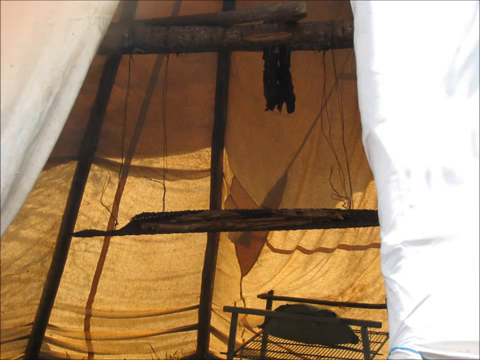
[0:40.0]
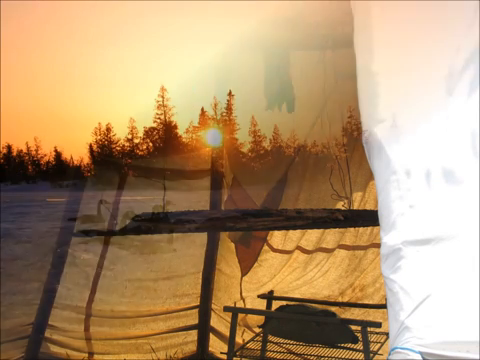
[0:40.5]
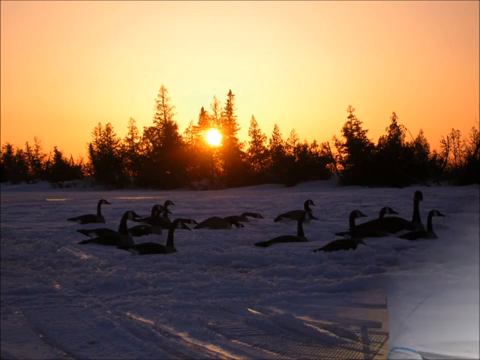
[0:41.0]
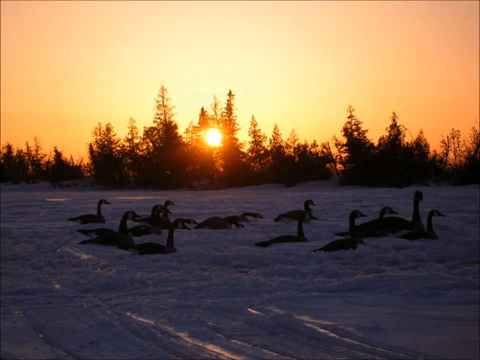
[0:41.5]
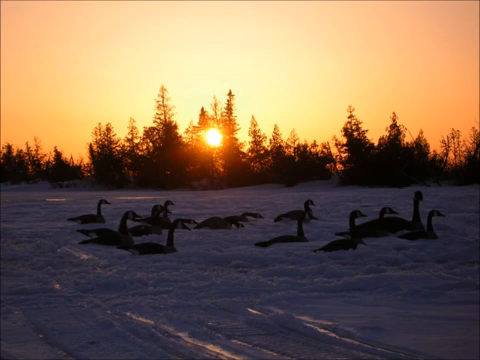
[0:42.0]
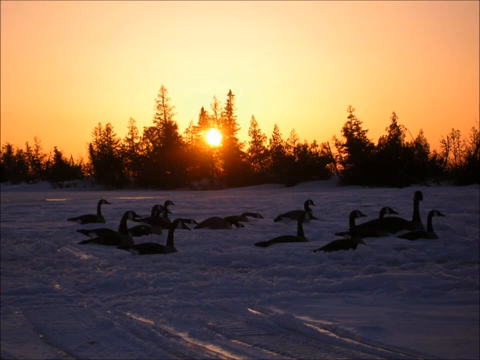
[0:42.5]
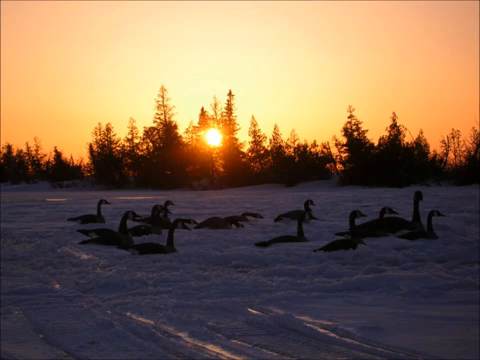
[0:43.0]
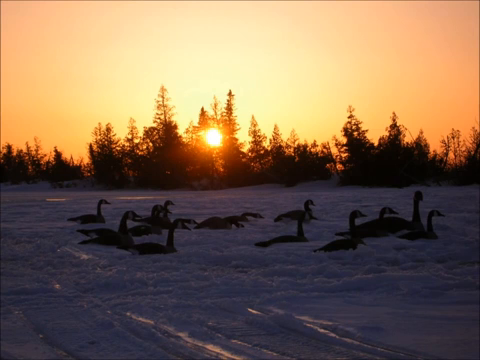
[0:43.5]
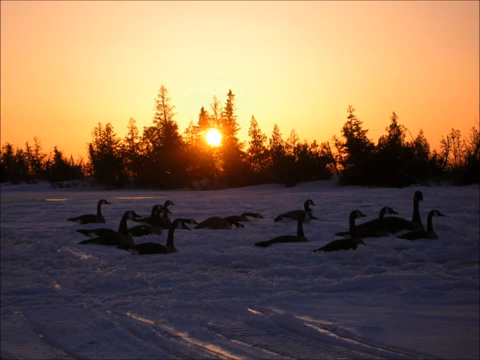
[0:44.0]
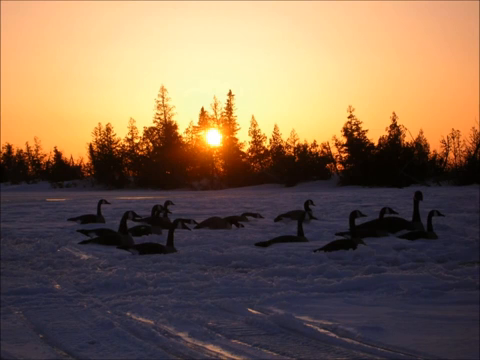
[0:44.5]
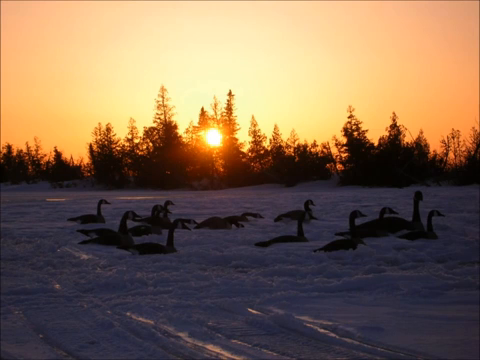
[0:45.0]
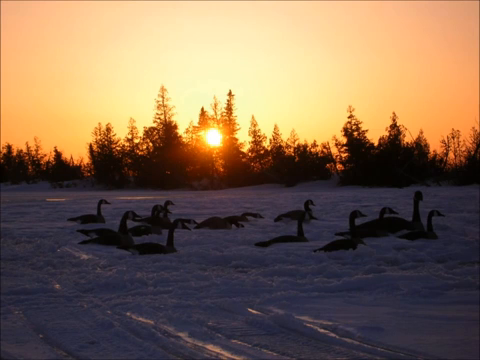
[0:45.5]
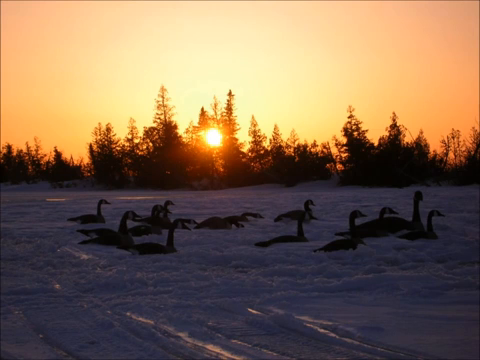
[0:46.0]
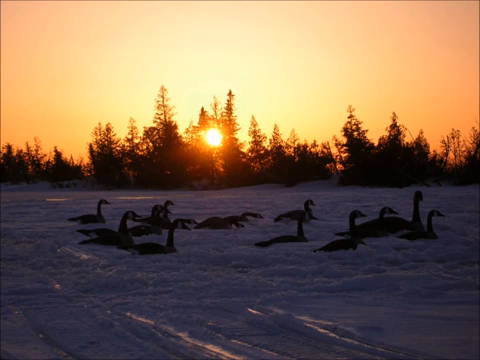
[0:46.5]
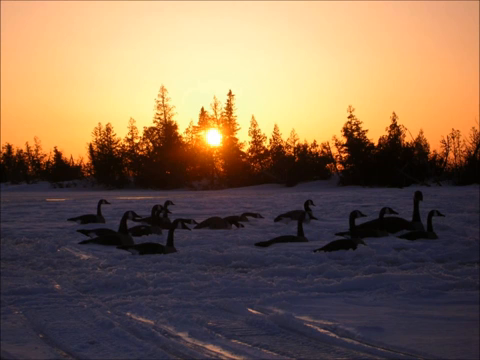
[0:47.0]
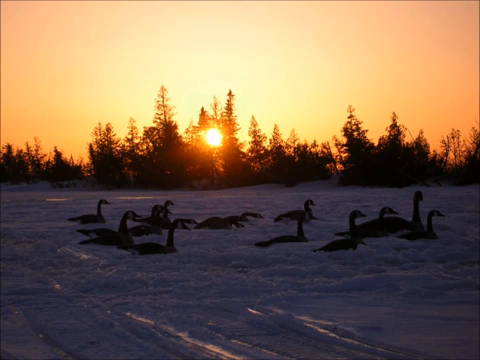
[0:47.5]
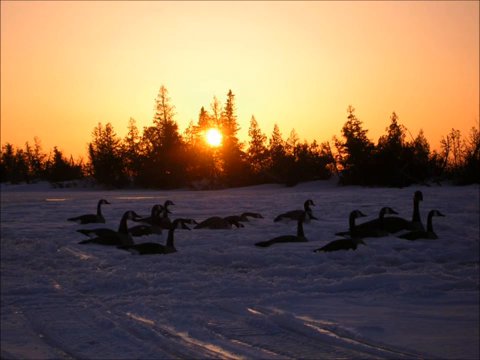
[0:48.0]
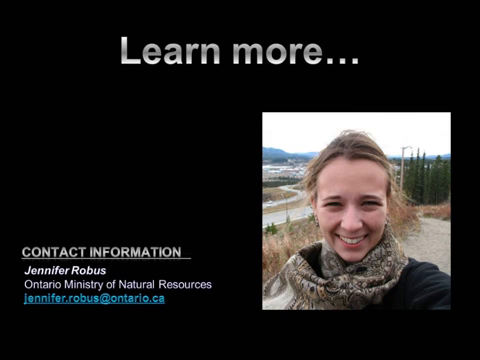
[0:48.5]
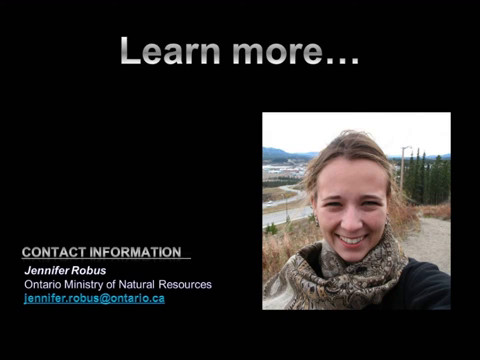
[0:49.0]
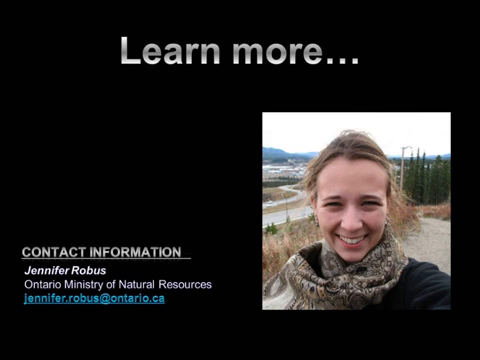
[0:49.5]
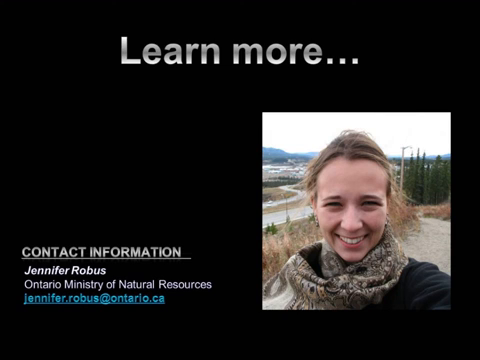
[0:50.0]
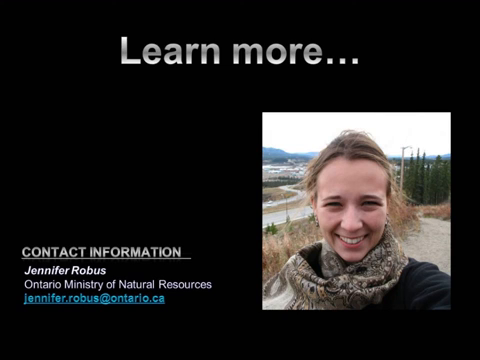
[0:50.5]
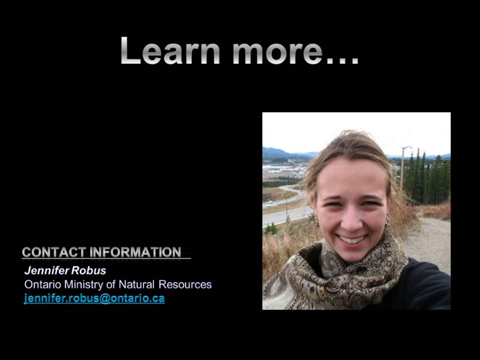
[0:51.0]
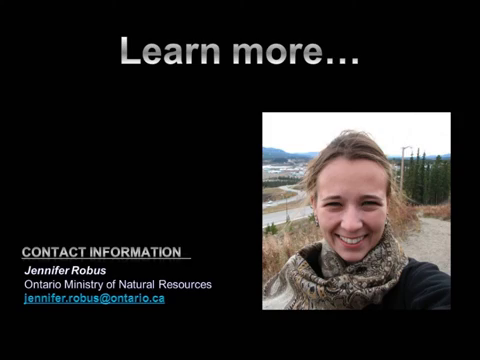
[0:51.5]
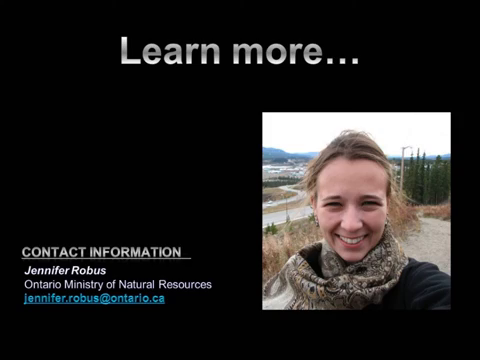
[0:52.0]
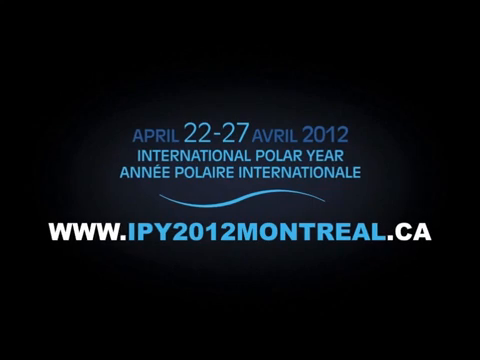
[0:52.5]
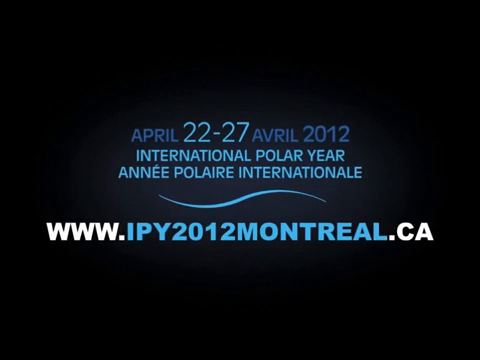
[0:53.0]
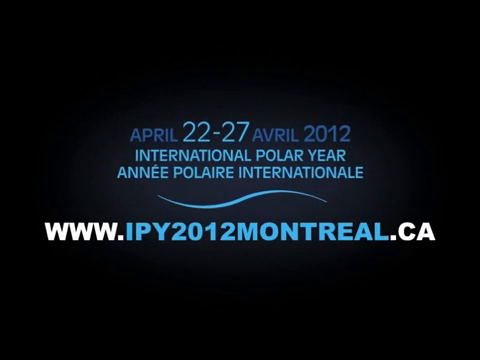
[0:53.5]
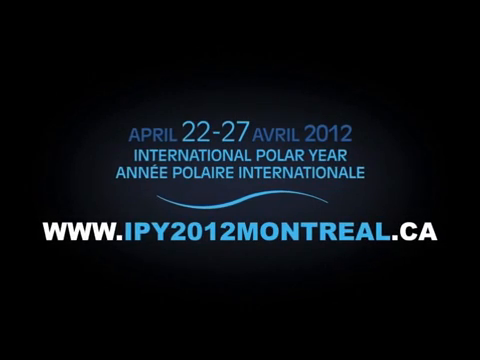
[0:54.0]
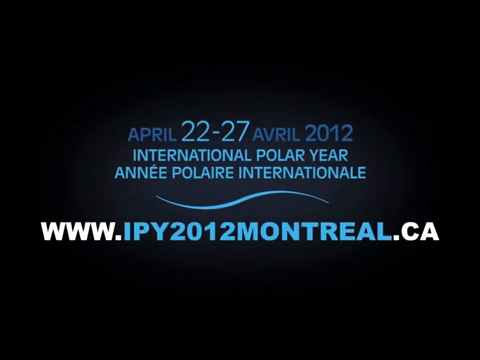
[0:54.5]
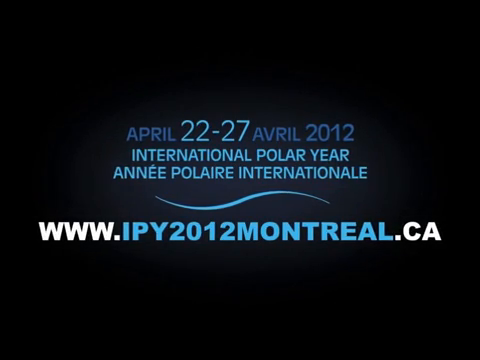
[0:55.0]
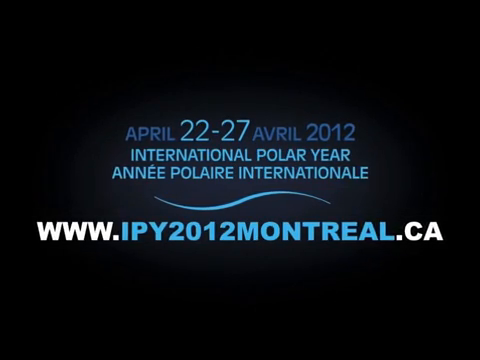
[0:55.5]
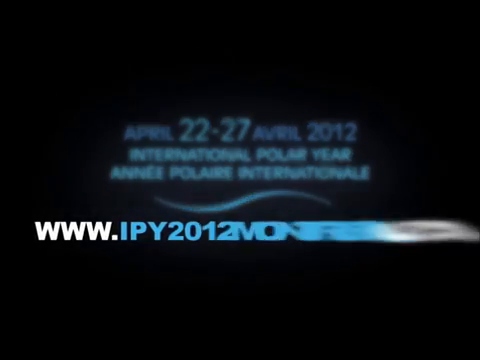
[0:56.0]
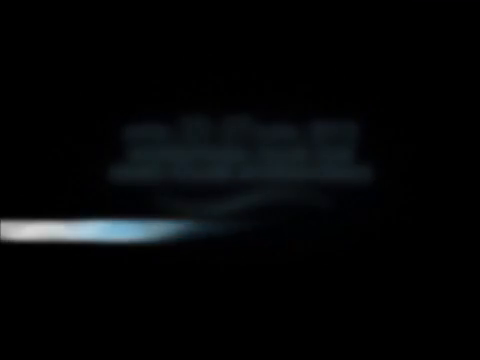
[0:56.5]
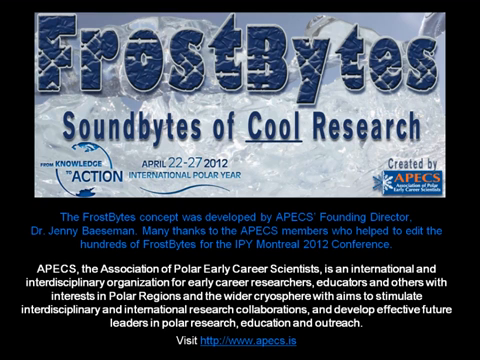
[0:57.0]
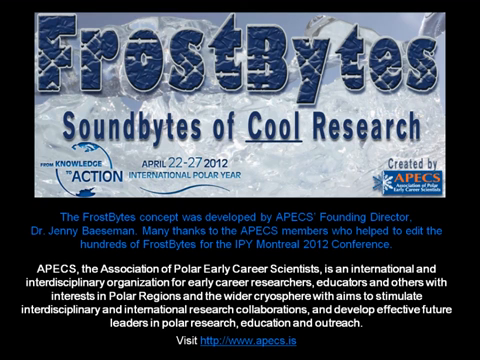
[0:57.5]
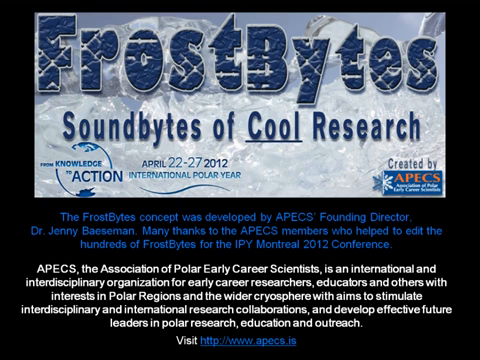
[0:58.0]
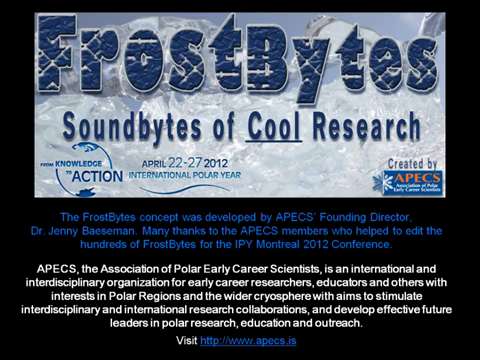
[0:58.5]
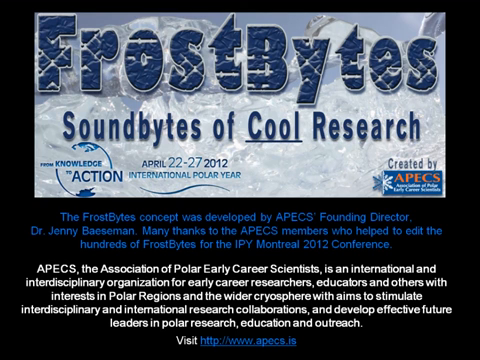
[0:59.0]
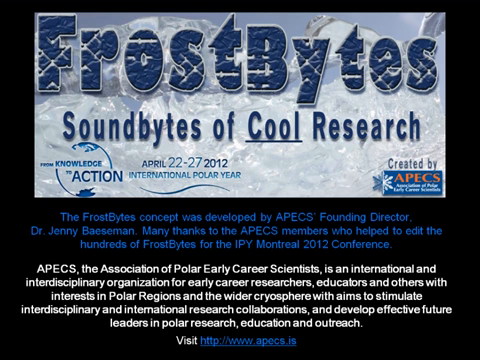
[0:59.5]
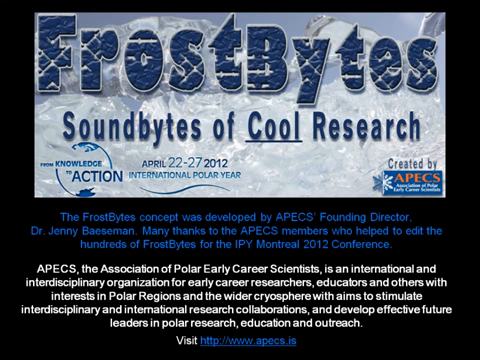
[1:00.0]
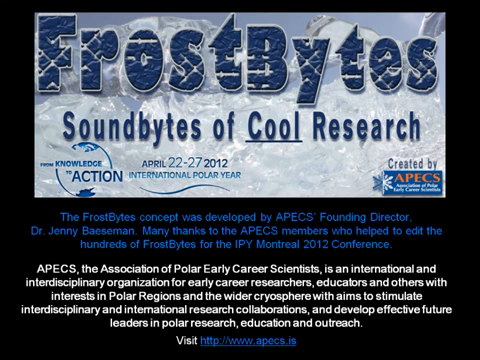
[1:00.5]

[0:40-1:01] The video shows the inside of the white tent seen earlier. It is hard to tell exactly what is inside, but there looks like maybe a metal rack with something on it, and maybe something hanging from a beam in the back. Next is a photograph of several geese that look like they are laying in the snow. A row of trees forms a tree line behind them at the edge of the snow, and a bright orange sun shines through the trees. The sky above is bright yellow-orange, yellowish in the middle and radiating to orange further from the sun. There are probably about a dozen or two geese, all laying in the snow and all facing to the right, so that they almost look like they are swimming through the snow. Finally, a screen says "Learn More."